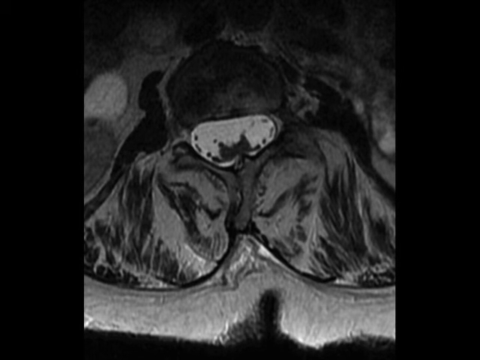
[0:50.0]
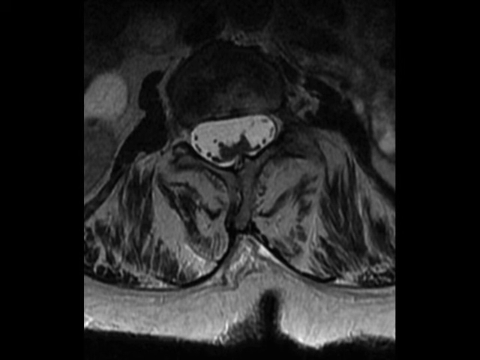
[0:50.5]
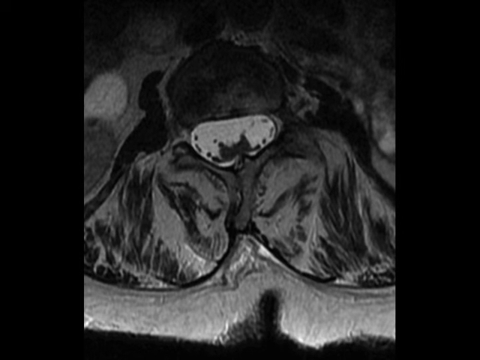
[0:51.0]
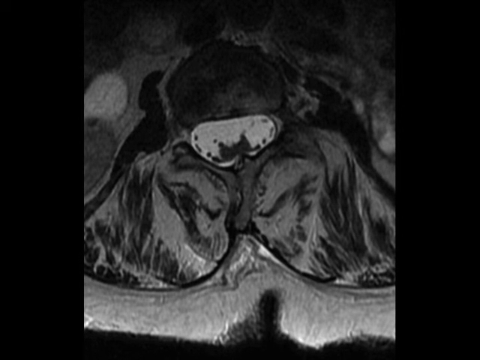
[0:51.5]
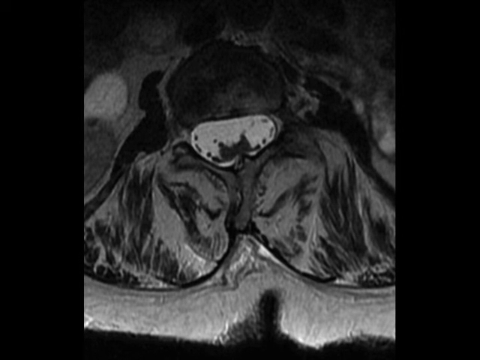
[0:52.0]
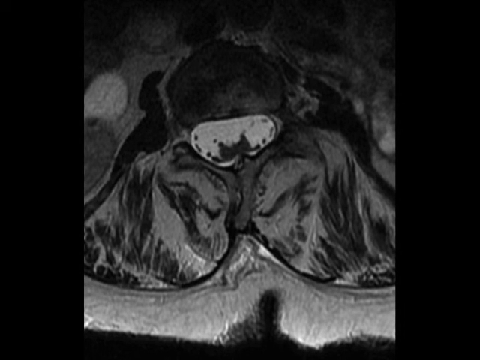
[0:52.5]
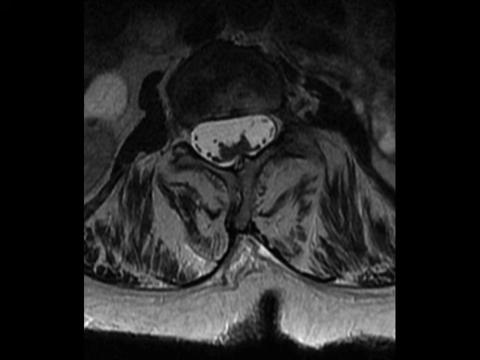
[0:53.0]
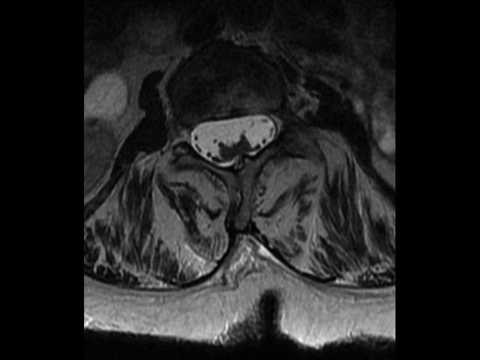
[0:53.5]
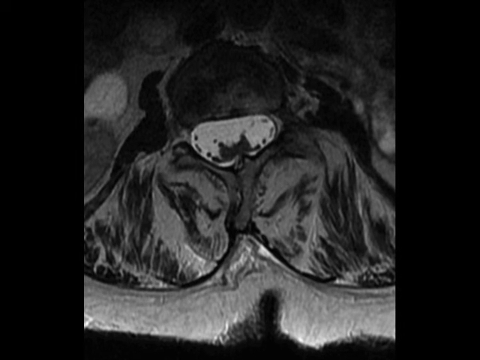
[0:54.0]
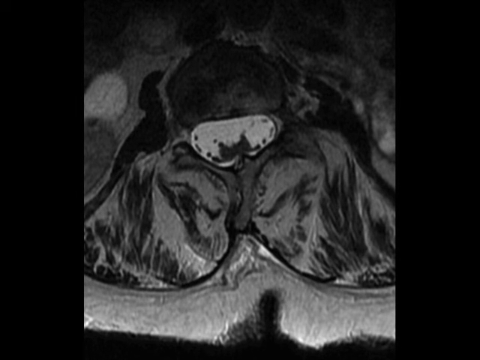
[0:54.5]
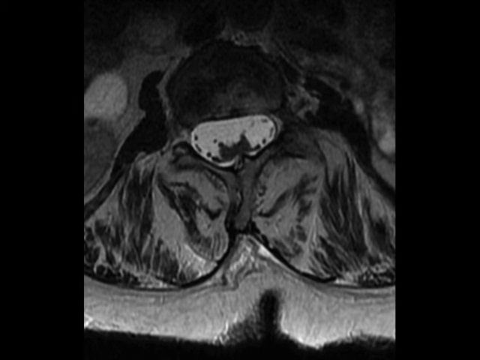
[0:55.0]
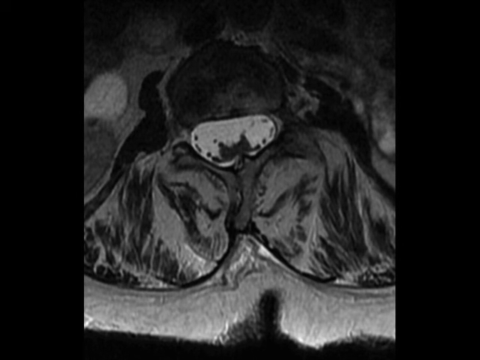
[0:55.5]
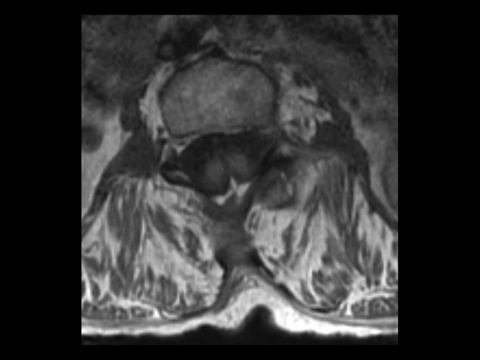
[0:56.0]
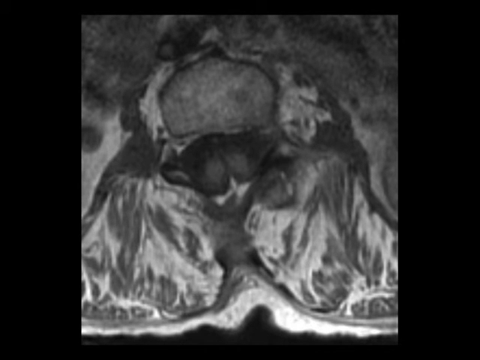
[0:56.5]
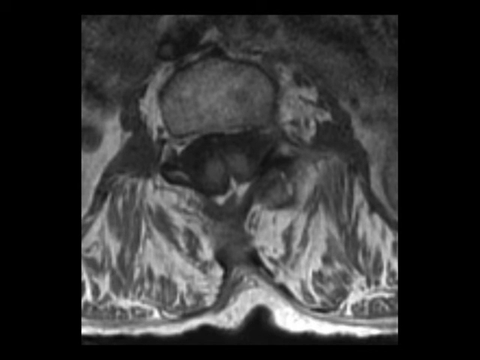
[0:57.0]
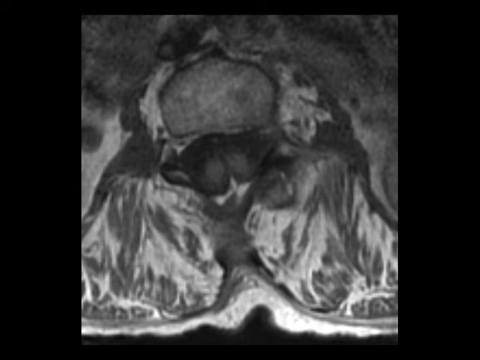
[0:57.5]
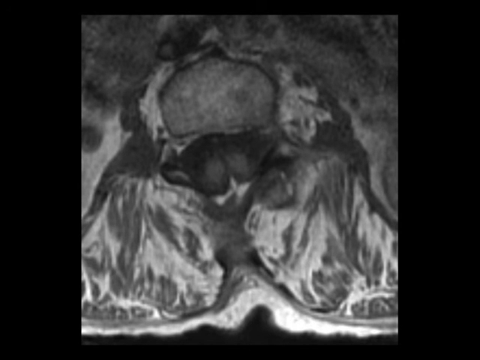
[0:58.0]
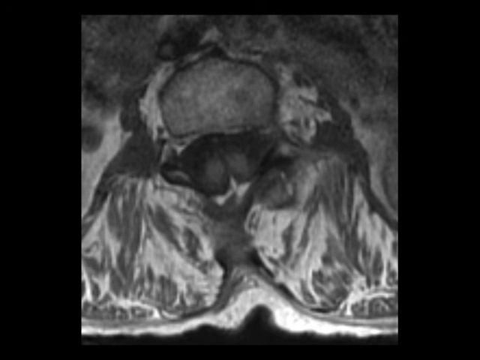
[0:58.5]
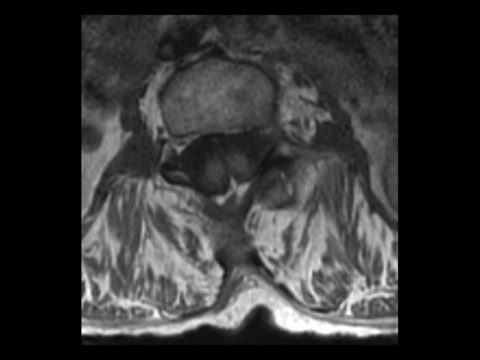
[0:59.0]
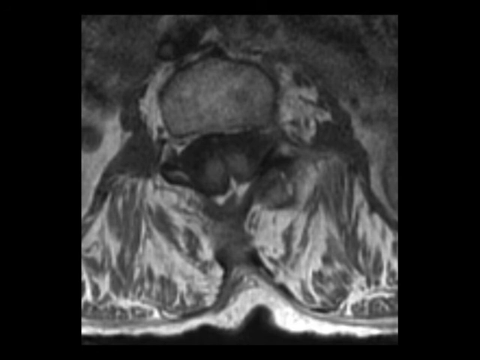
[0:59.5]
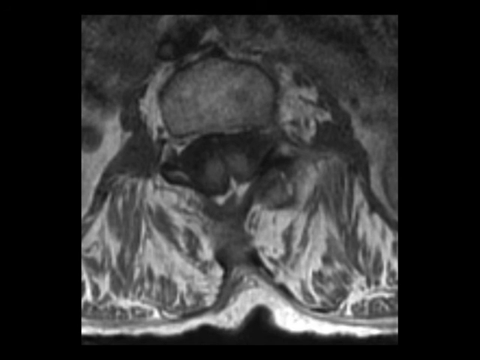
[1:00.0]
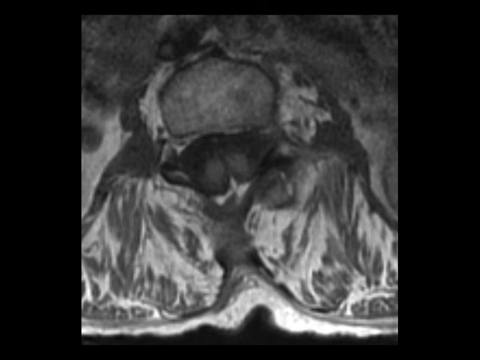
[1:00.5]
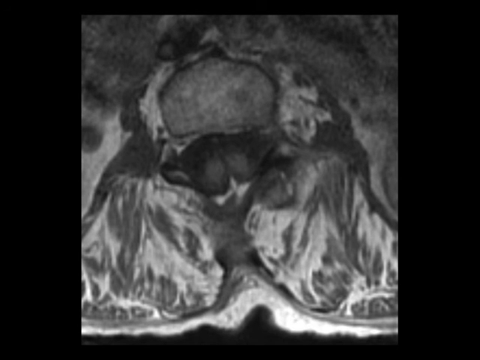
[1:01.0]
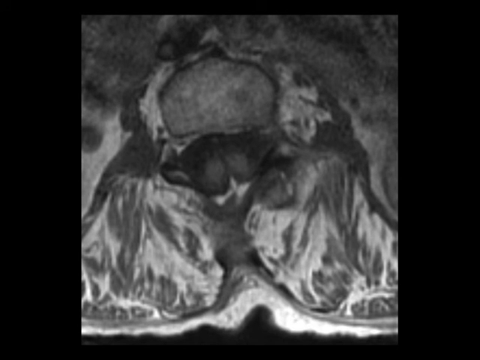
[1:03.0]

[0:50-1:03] A black and white x-ray of a spinal column, taken from above, shows the back of the person. In the center, the spinal column is highlighted in white, and everything around it is in grayer colors. The left and right sides of the person's body are cut off by the frame. There is no movement until the end, when the view zooms in closer to the spinal column from above, and a little more white shows up in the x-ray around the spinal column itself.